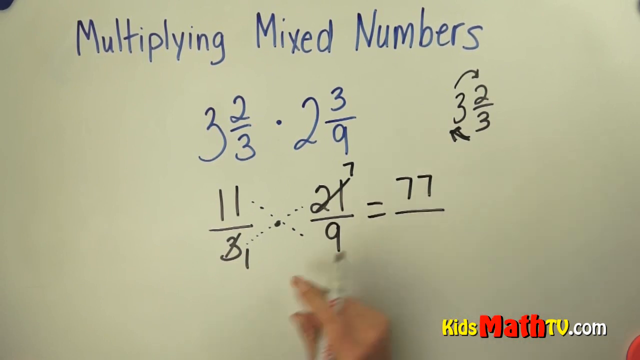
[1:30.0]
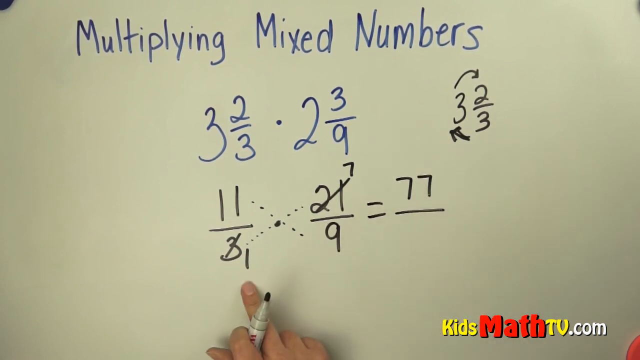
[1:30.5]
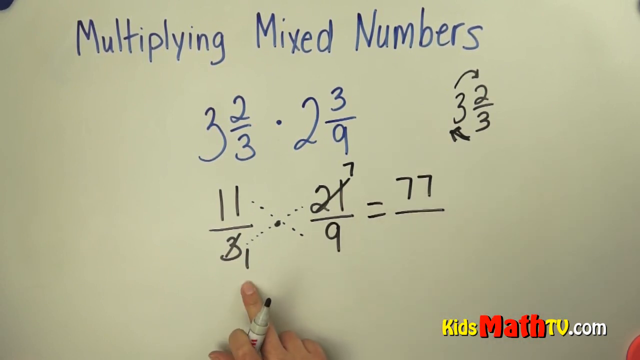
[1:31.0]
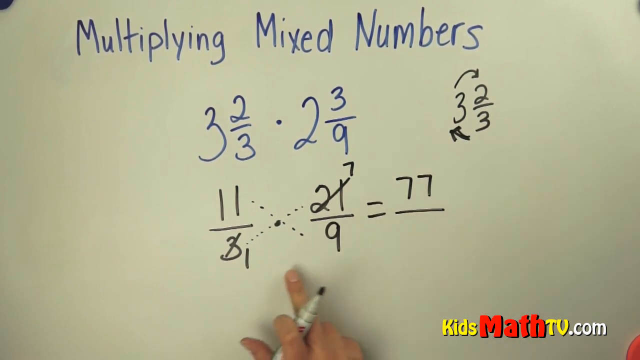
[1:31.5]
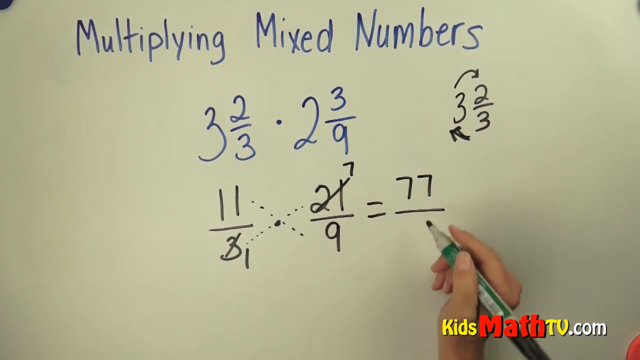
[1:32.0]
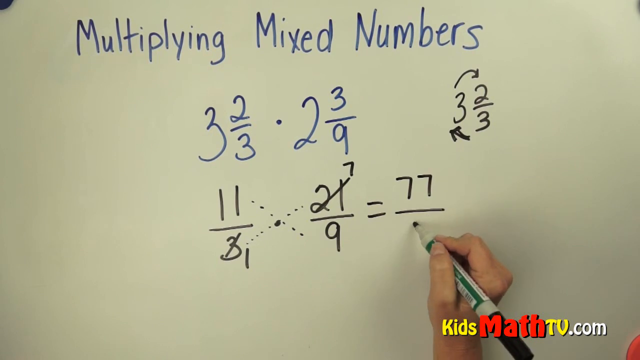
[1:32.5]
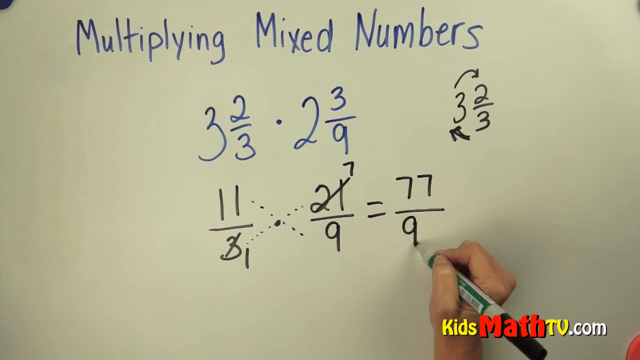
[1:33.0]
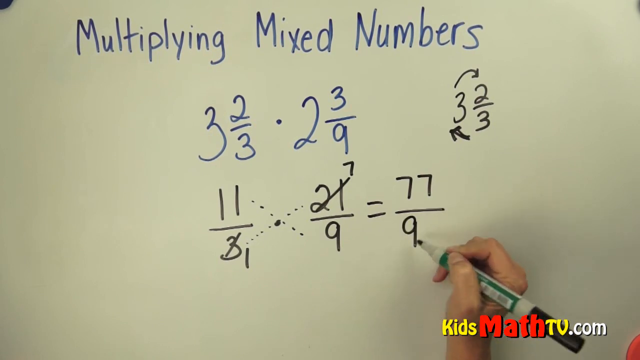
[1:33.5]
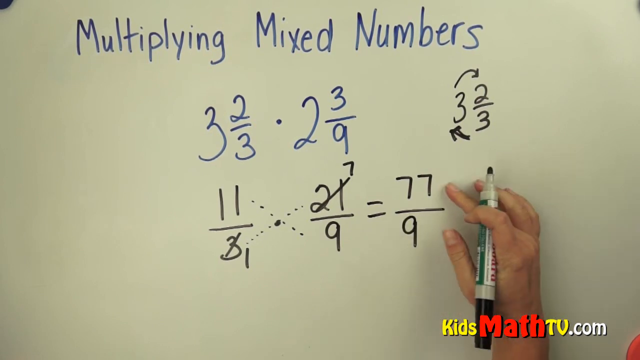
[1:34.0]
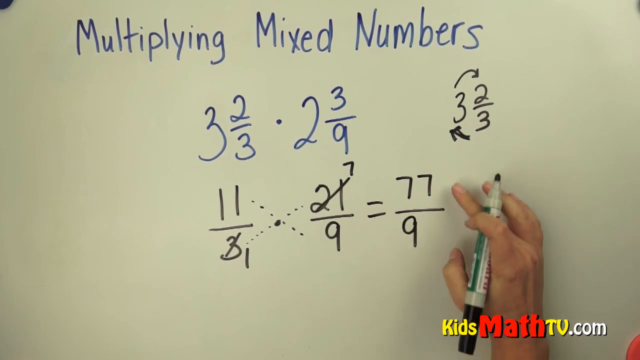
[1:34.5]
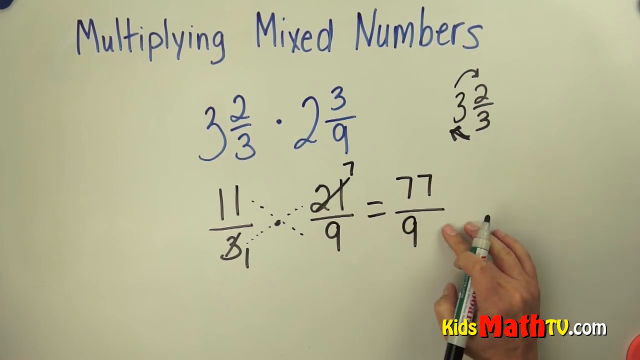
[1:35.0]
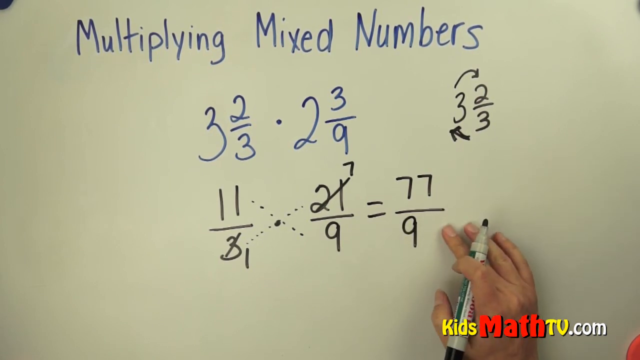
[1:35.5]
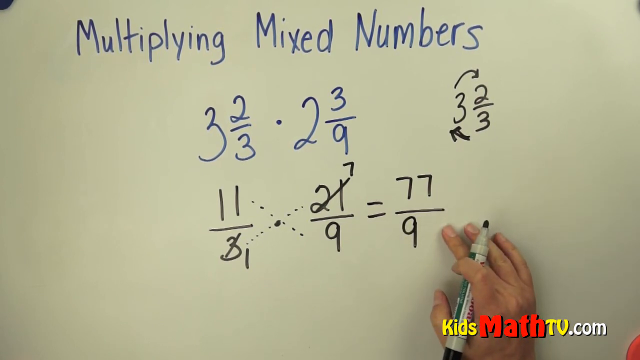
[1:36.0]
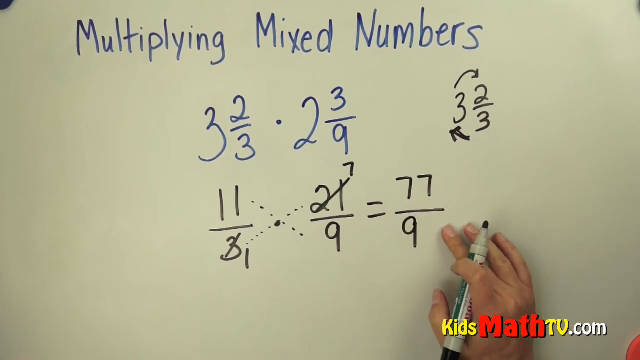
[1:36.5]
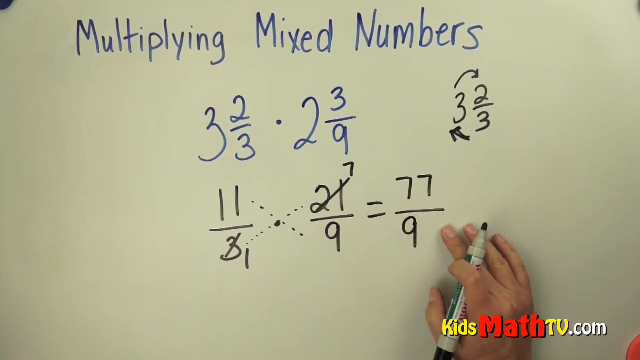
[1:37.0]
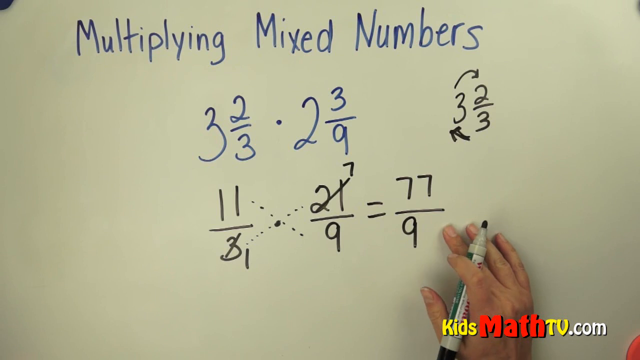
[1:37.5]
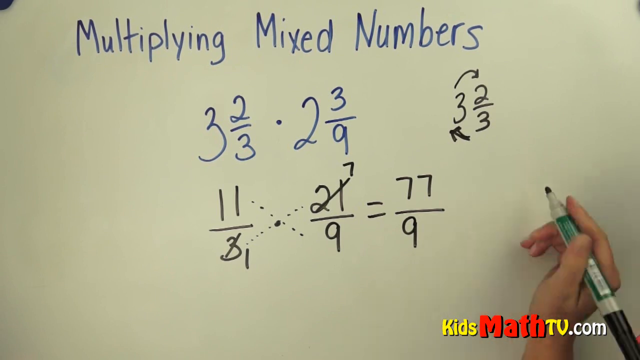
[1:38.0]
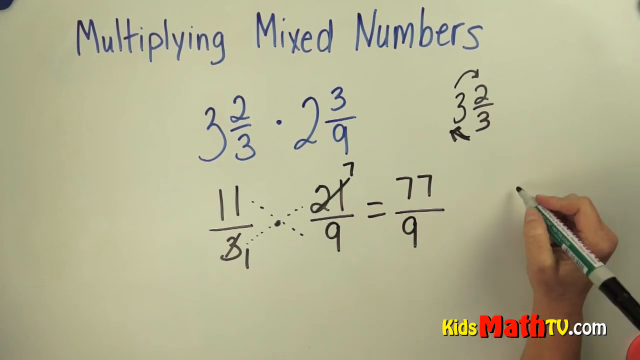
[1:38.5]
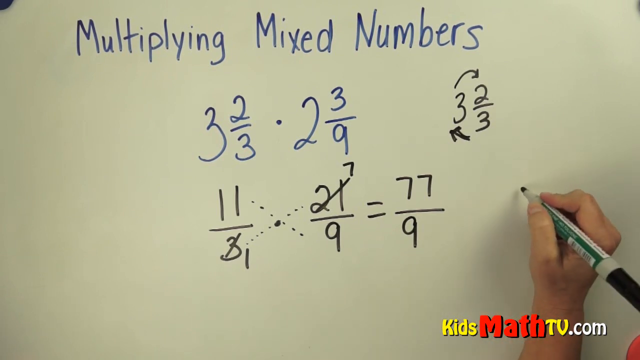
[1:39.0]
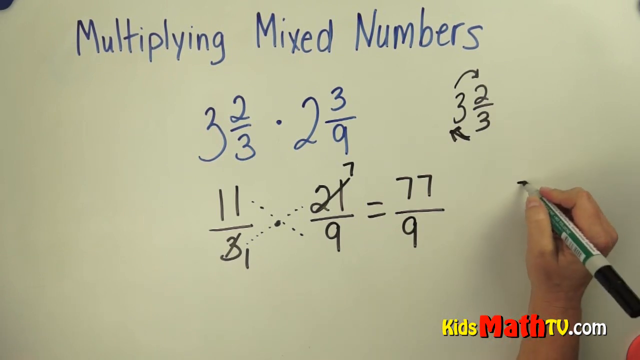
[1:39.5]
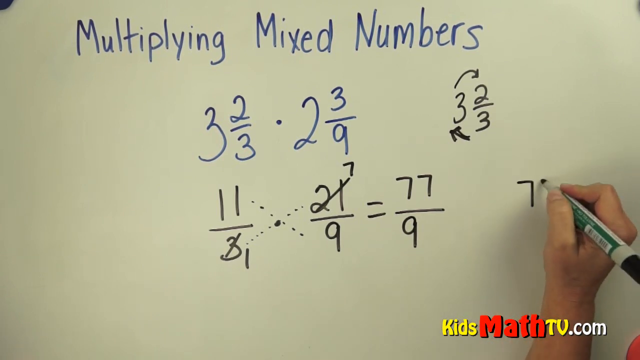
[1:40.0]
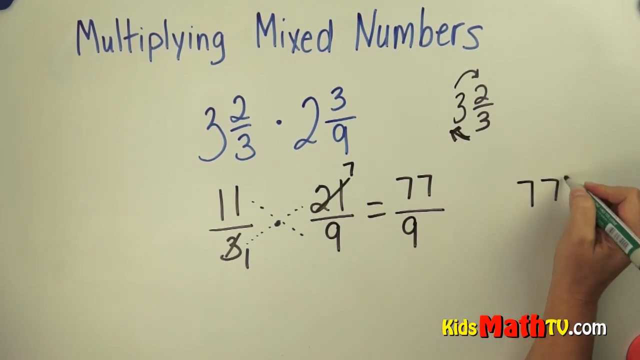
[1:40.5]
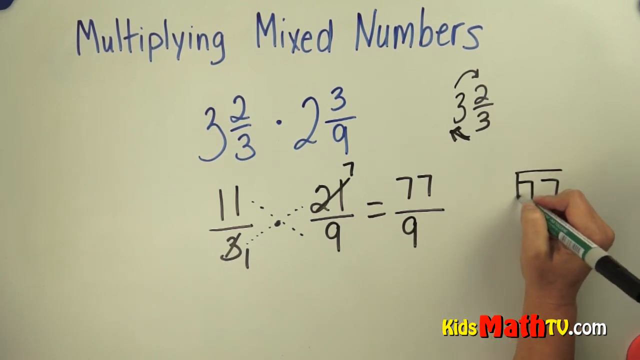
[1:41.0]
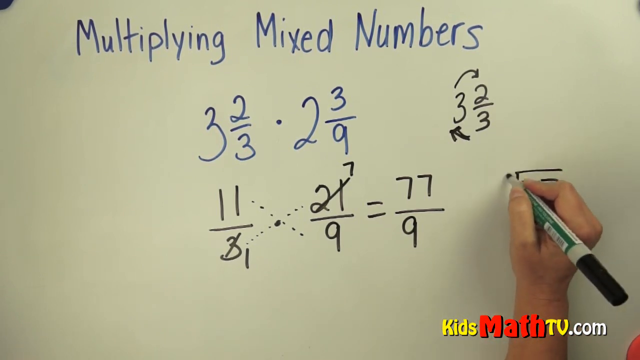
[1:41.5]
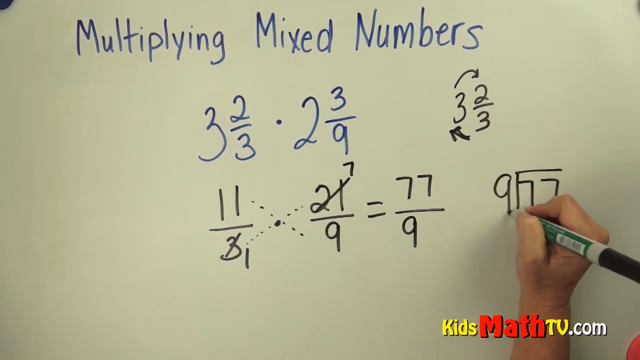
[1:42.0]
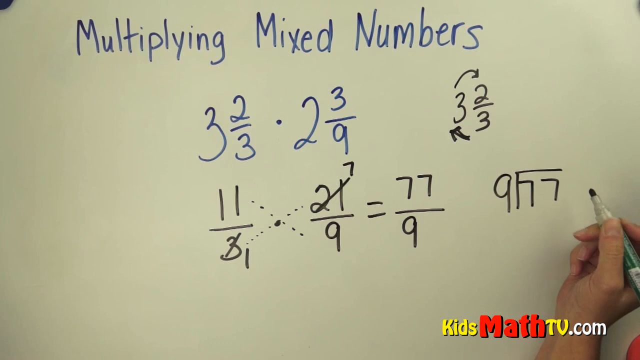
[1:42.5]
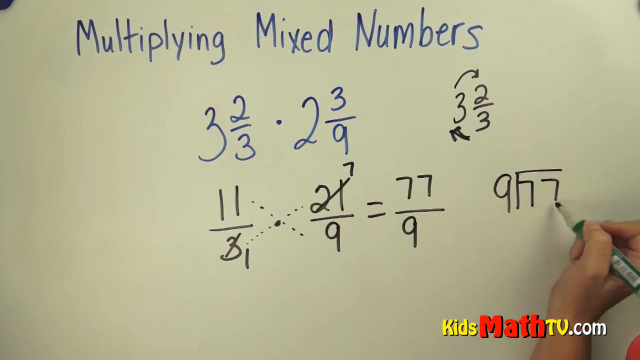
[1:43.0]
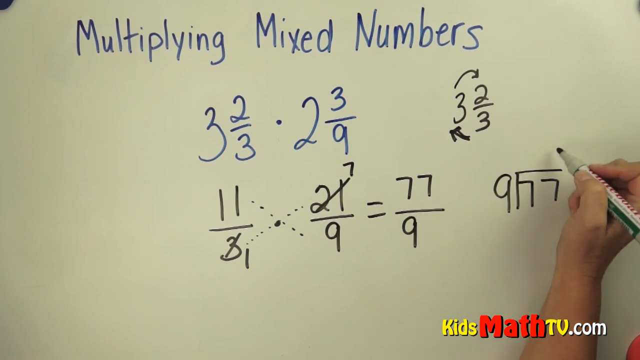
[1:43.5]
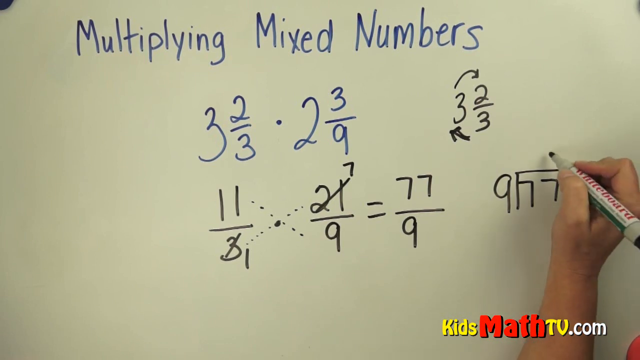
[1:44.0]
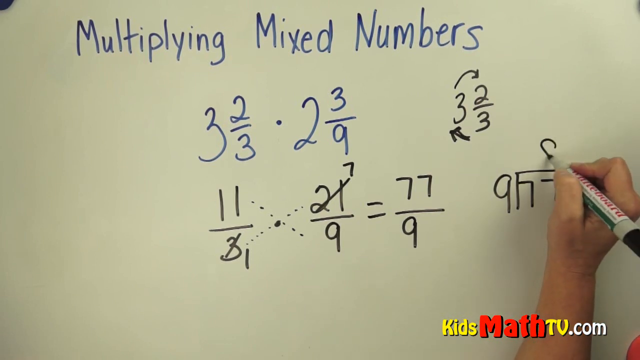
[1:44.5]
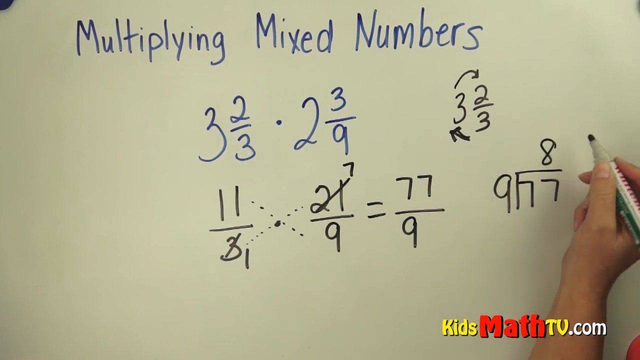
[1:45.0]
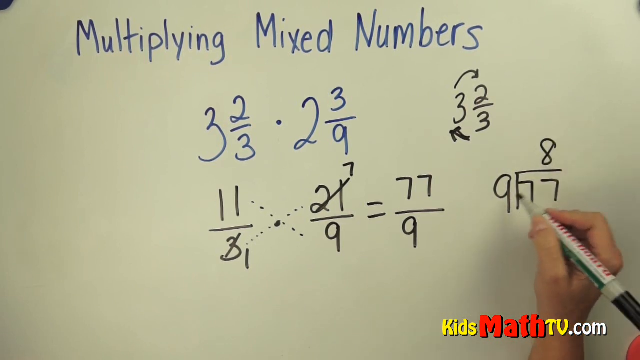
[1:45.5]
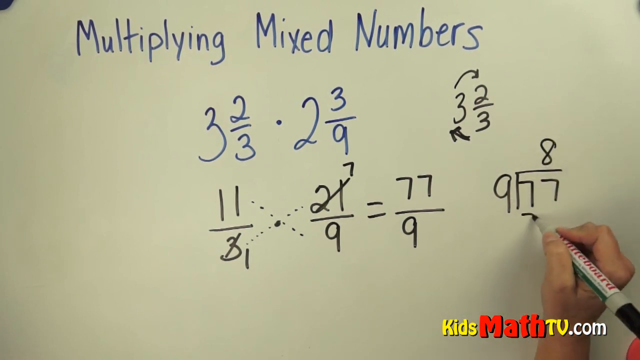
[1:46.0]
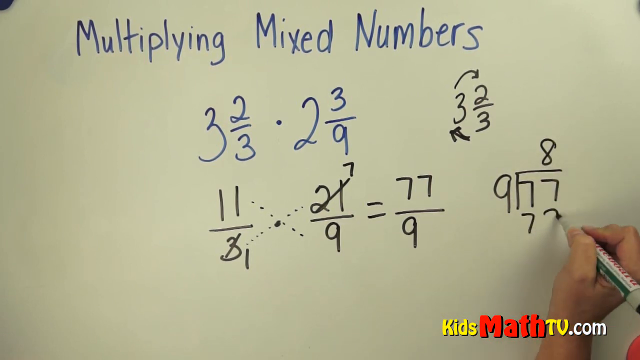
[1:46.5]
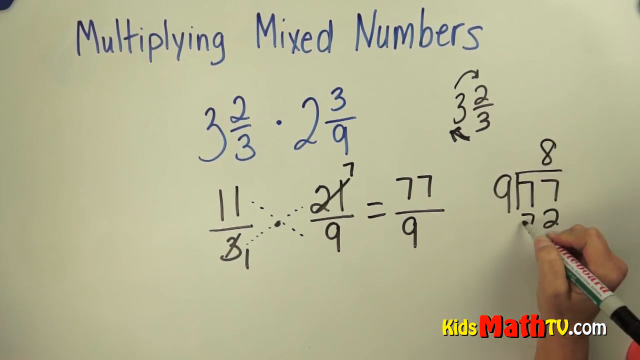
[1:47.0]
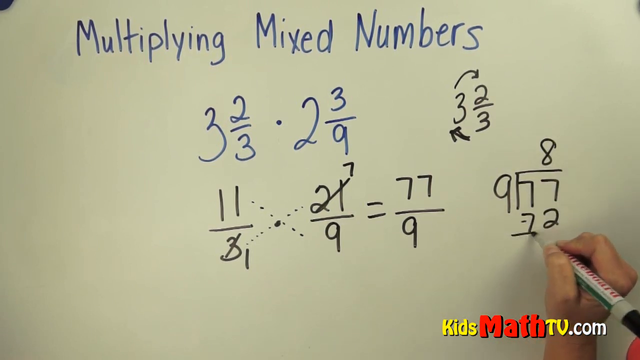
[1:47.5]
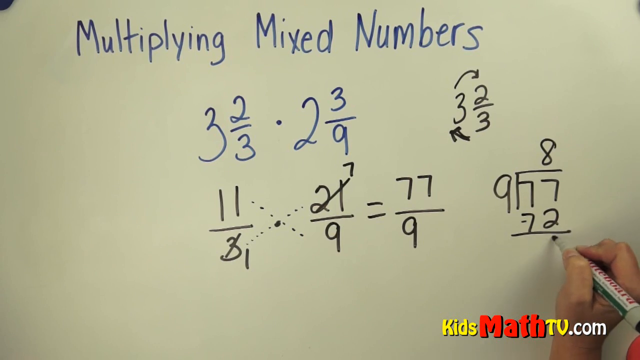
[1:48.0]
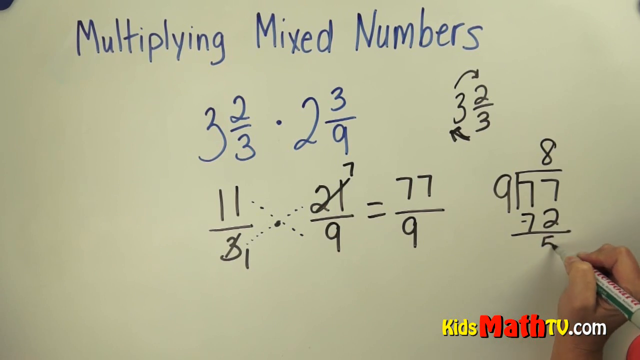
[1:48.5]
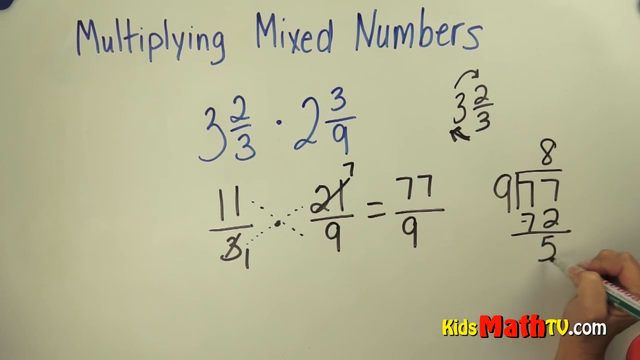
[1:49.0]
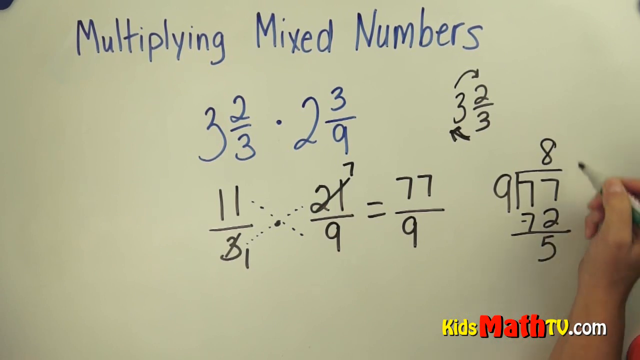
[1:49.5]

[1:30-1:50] The whiteboard shows the blue heading "multiplying mixed numbers", with three and two thirds and two and three ninths beneath it, and below them the fractions 11 over three and 21 over nine. Two dashed lines run between the numerators and denominators of the black fractions; the denominator of the first fraction is crossed out and replaced with a one, and the numerator of the second is crossed out and replaced with a seven. After an equal sign is 77 as the numerator, and a hand holding a felt tip pen writes the denominator nine, giving 77 over nine. The hand then attempts to divide 77 by nine.